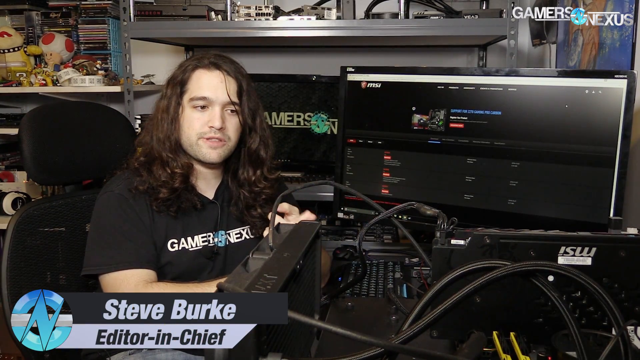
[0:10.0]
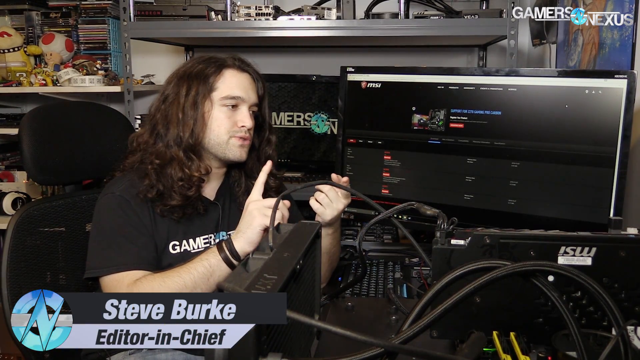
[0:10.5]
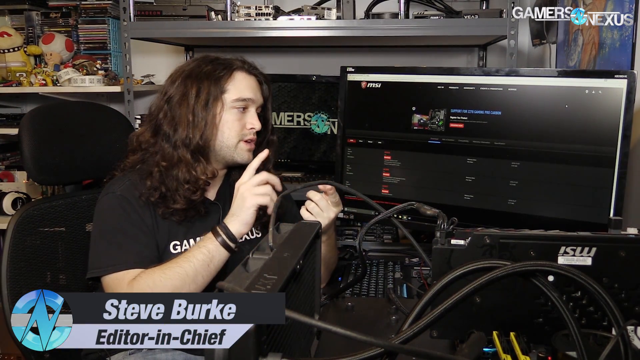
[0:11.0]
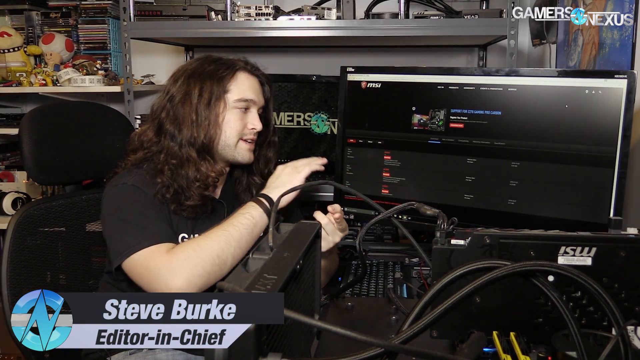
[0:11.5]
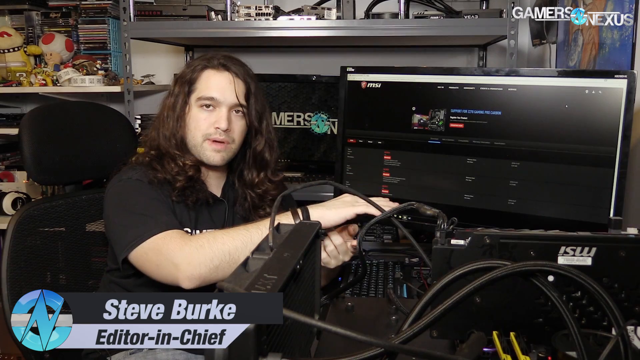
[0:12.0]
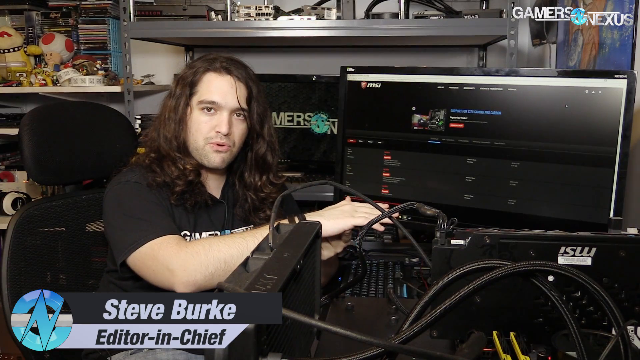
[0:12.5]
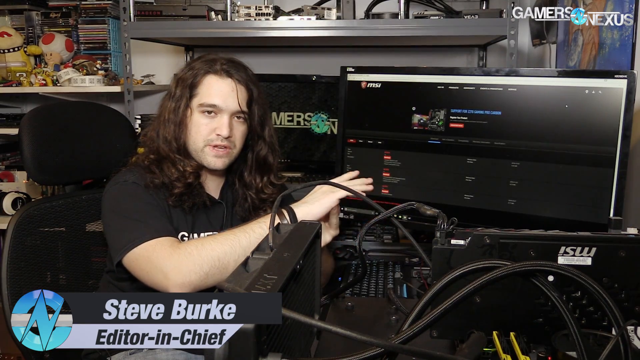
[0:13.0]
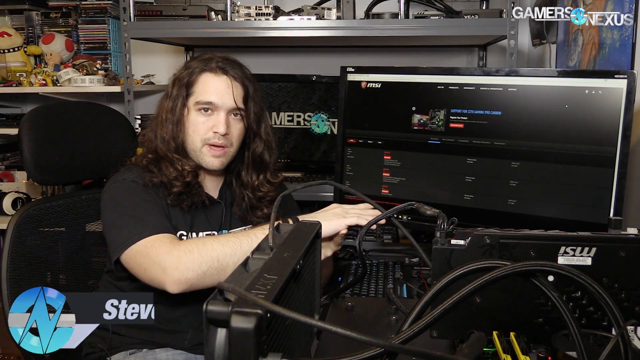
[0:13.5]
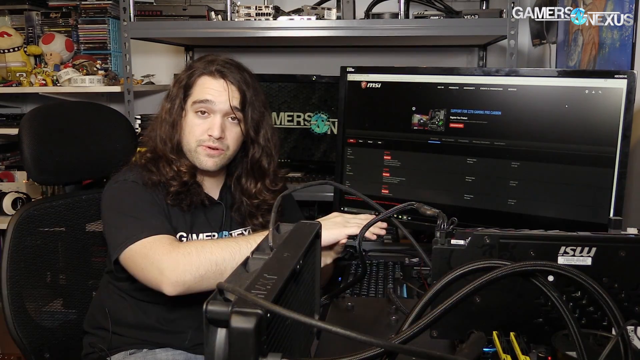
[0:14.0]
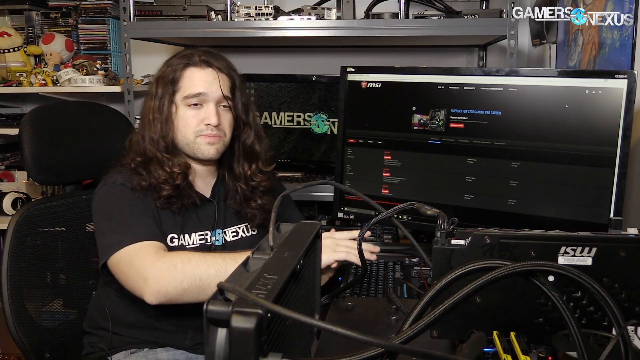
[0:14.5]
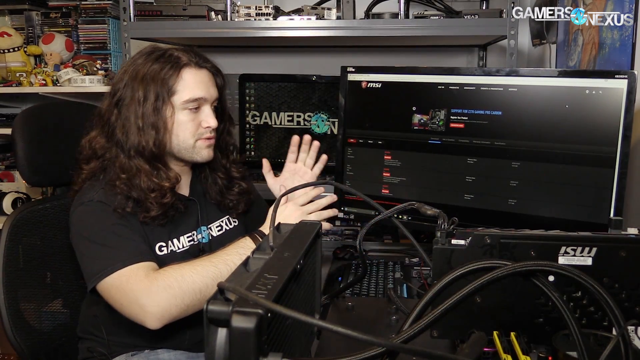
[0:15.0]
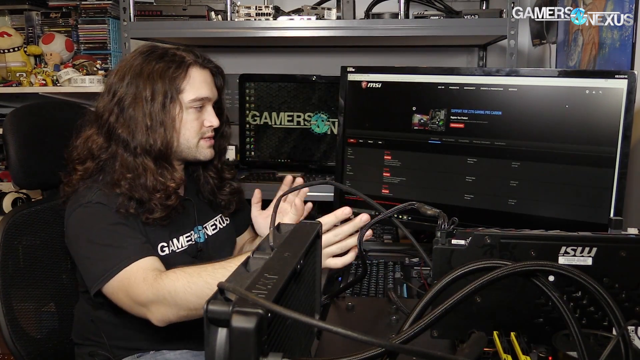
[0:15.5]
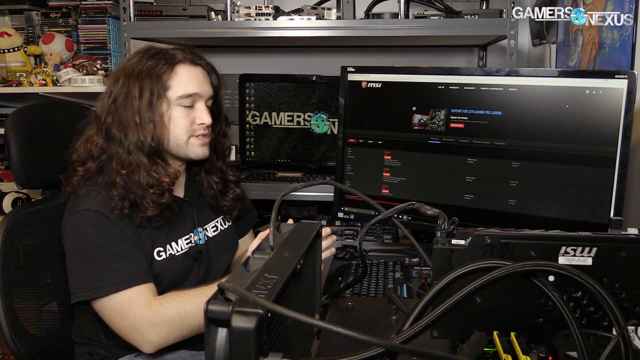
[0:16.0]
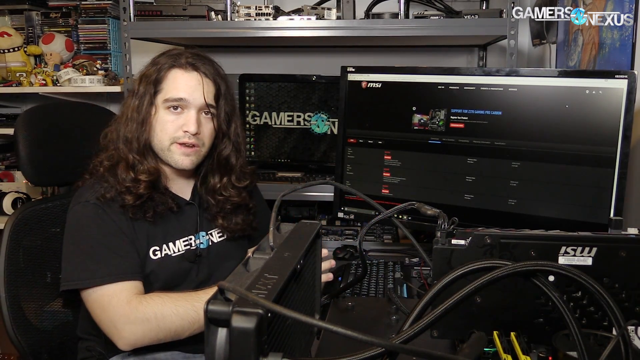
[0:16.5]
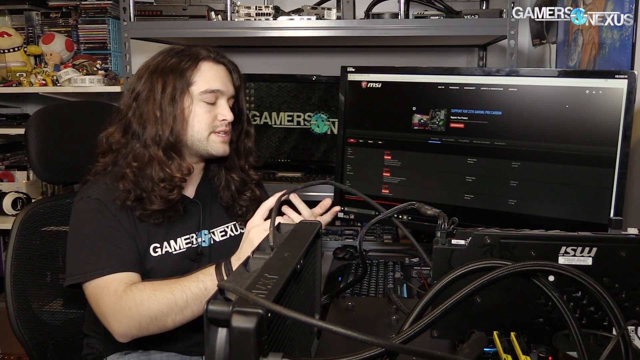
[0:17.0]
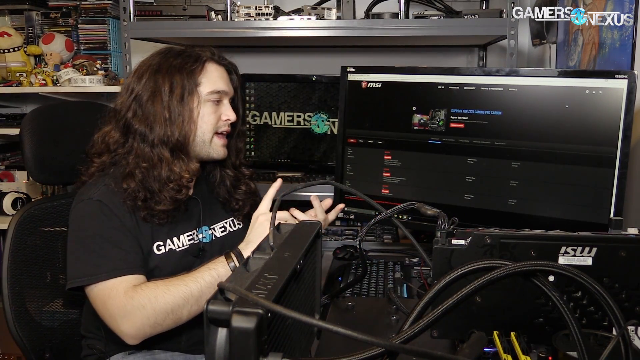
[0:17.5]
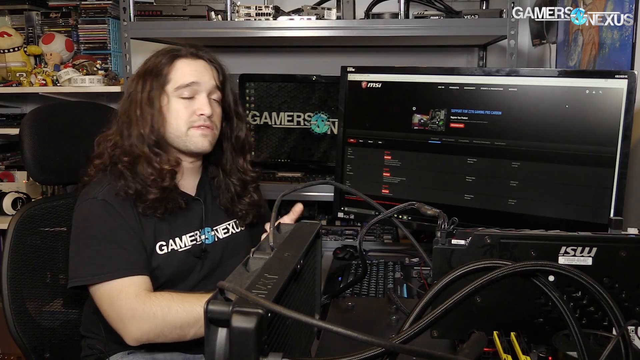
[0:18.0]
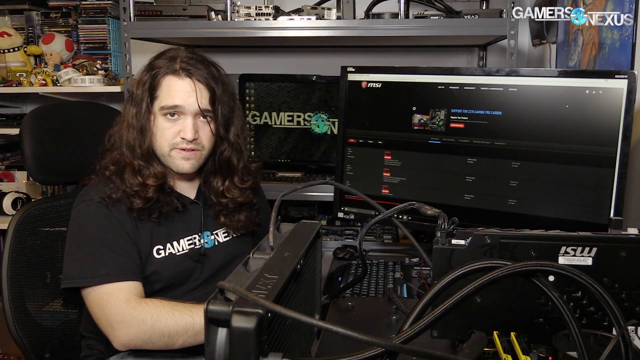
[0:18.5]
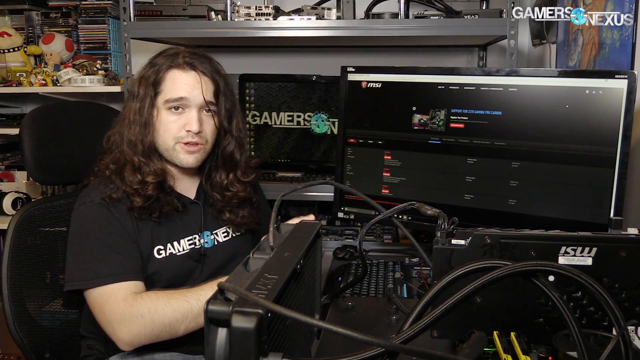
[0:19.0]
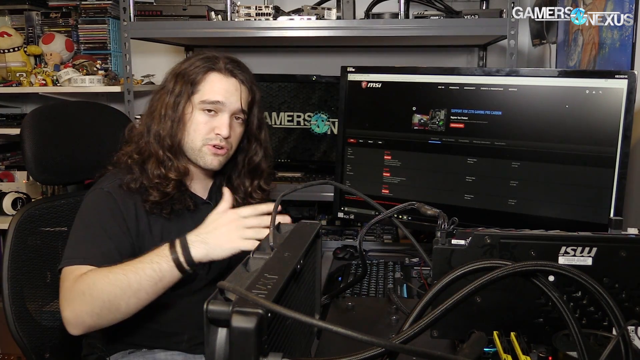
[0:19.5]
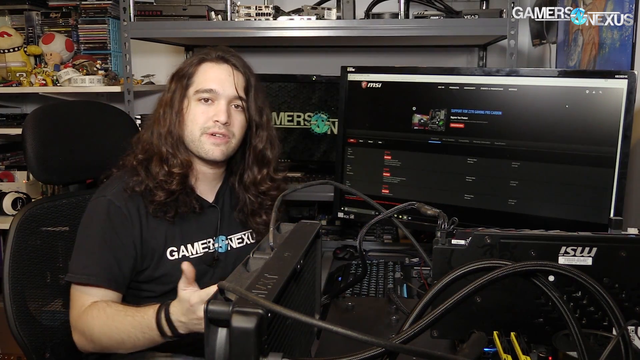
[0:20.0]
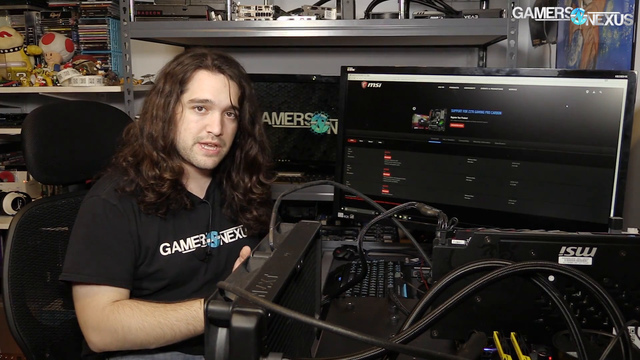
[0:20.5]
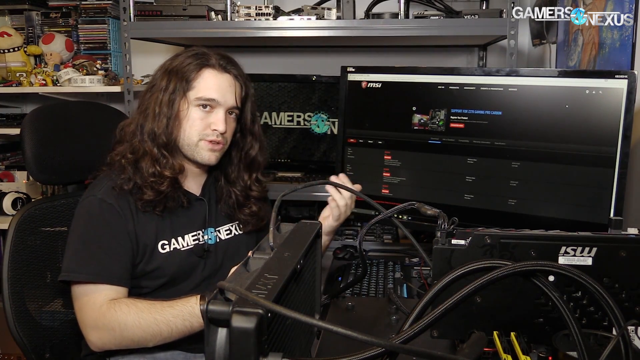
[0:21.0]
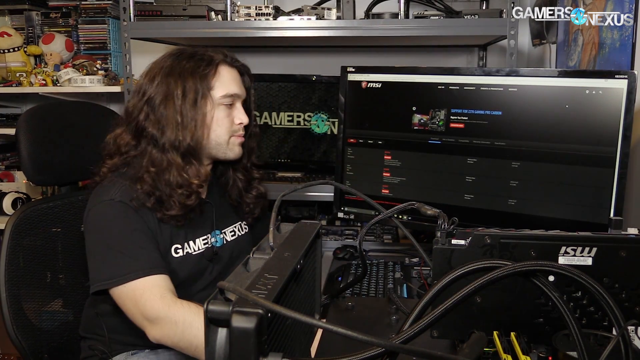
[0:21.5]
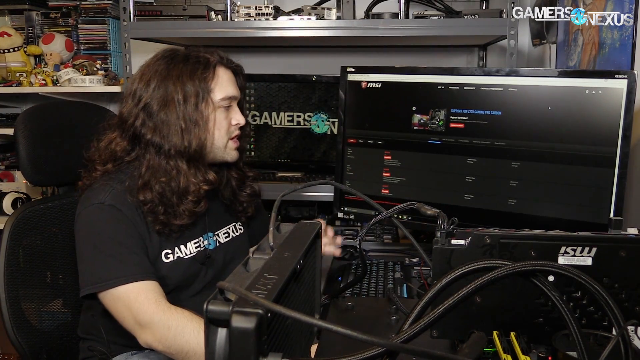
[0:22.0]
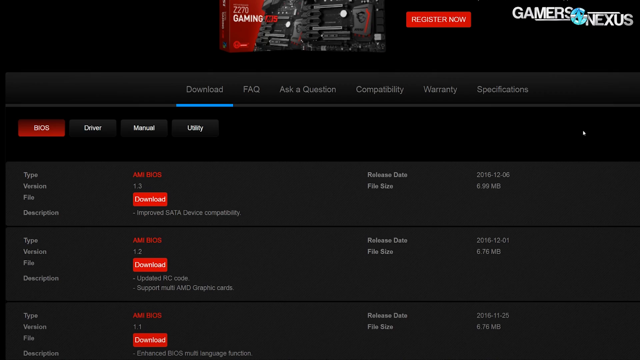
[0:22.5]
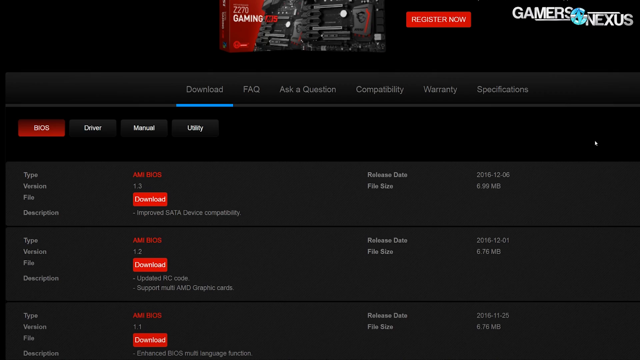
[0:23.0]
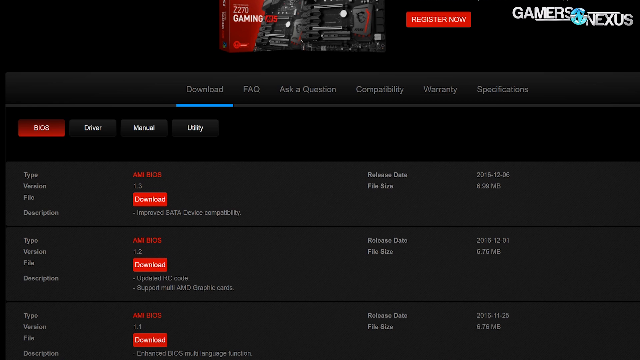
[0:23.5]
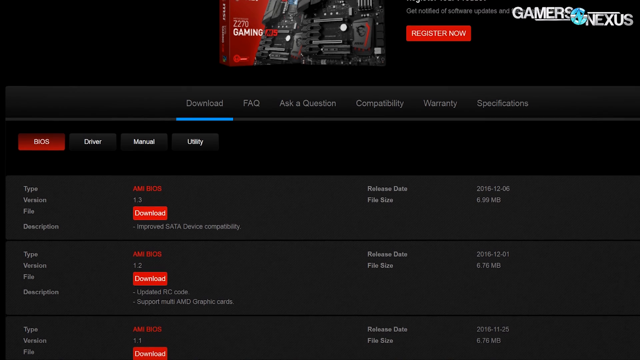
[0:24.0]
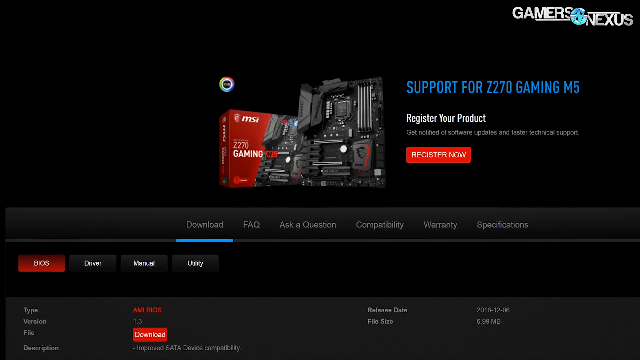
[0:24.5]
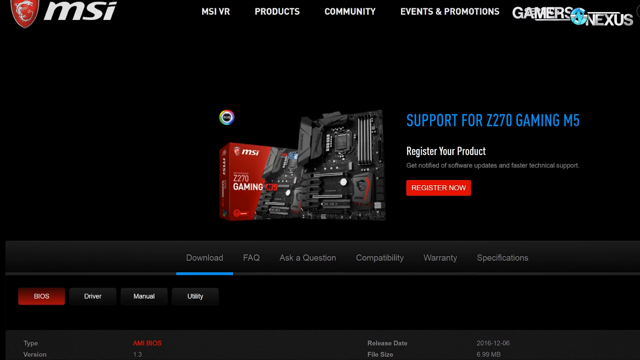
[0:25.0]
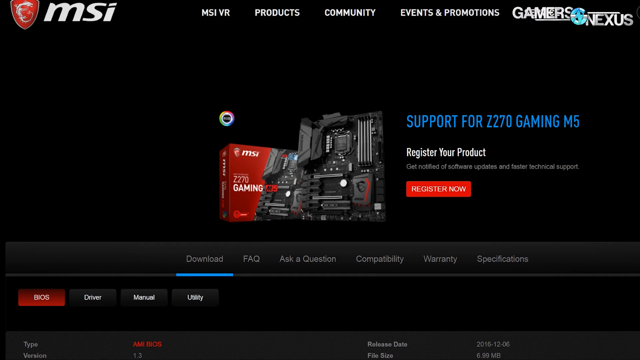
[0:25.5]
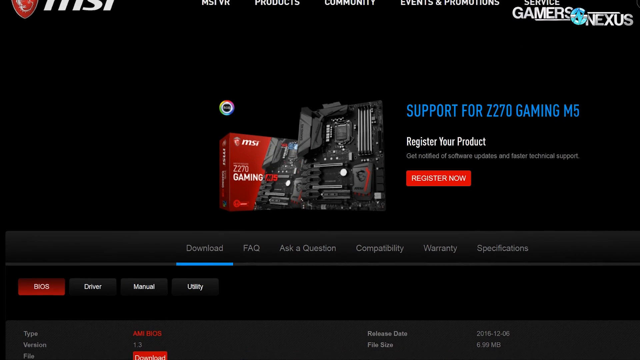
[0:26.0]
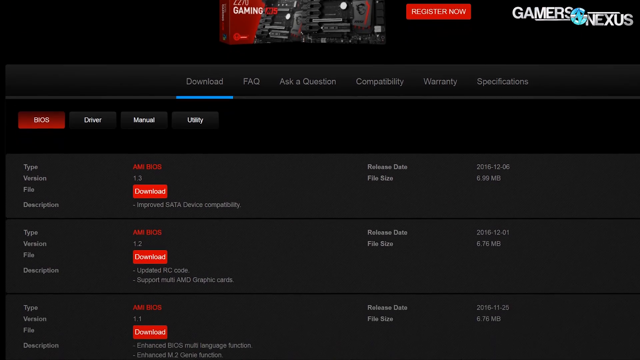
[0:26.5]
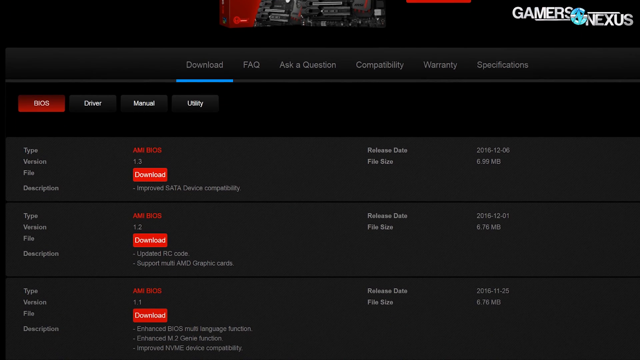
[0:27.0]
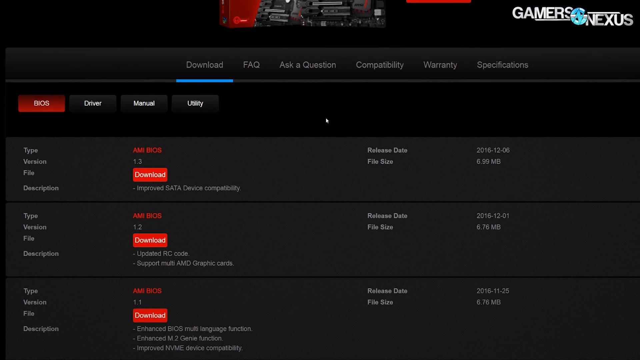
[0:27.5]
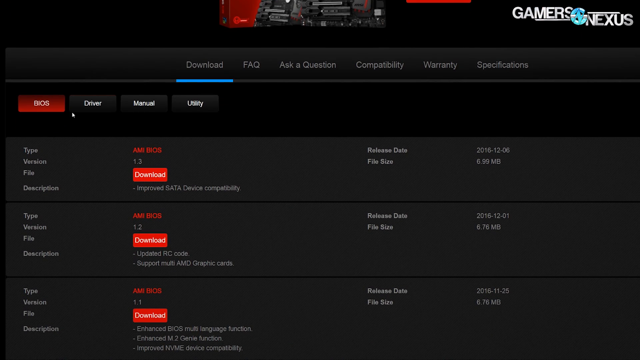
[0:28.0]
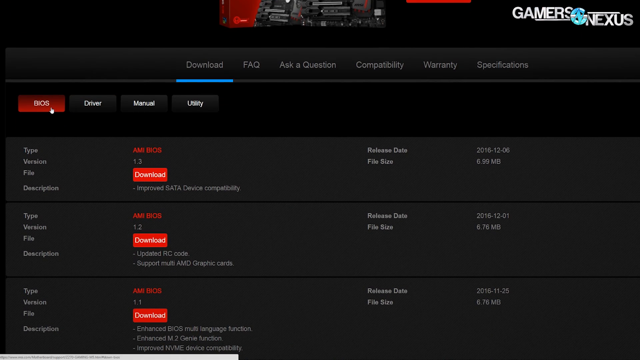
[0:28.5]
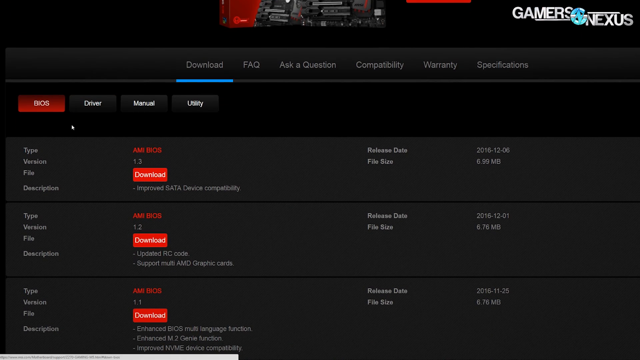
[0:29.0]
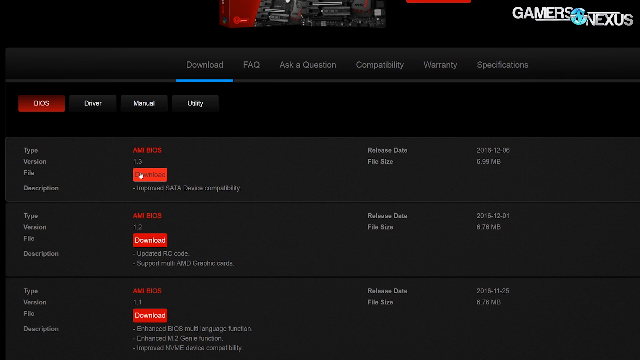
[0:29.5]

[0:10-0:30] A man sits at a computer desk with multiple monitors. Text reads "Gamers Nexus", apparently the name of the company or YouTube channel, and he is identified as Steve Burke, editor-in-chief. He wears a Gamers Nexus shirt, and Gamers Nexus is also on one of his monitors. He has wristbands on his wrists and makes hand gestures. He then looks at something on the monitor, where the screen says "register now" and shows two different things to download, along with something like "C75". Text reads "support for Z270 gaming" and "register your product"; it is possibly a product being sold.